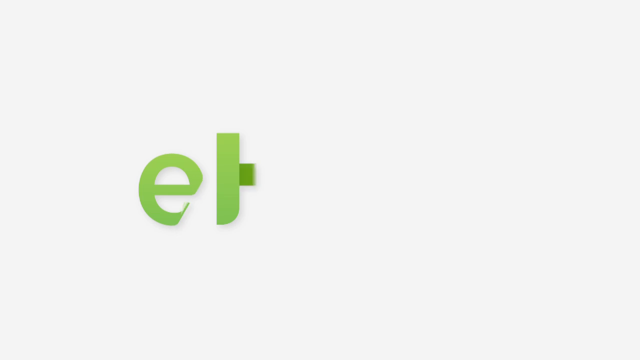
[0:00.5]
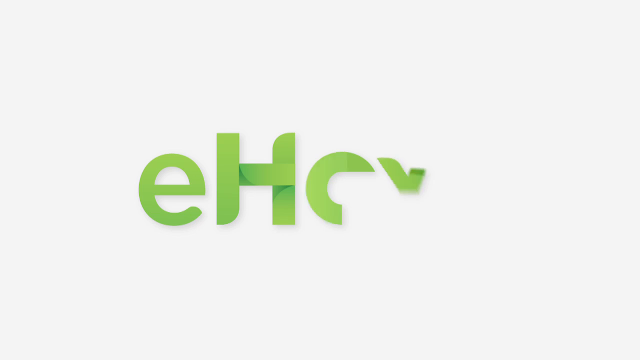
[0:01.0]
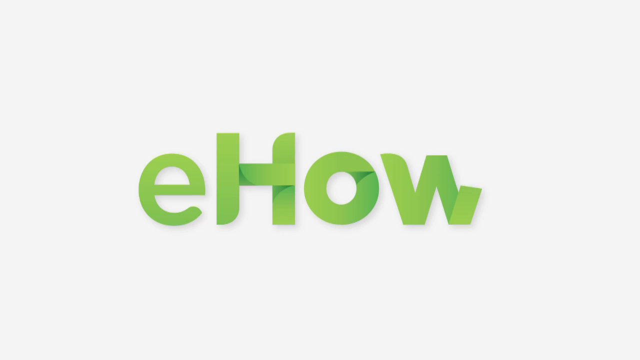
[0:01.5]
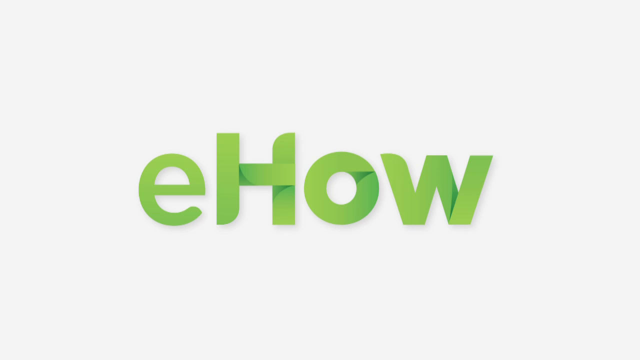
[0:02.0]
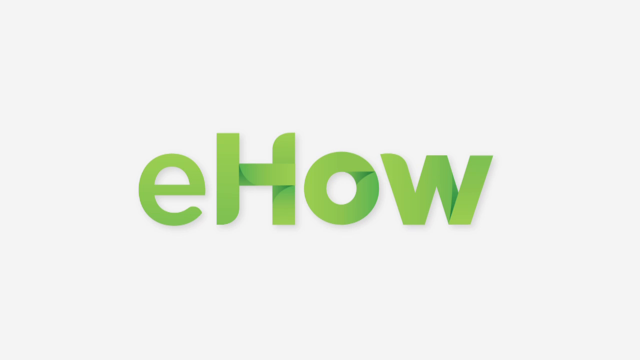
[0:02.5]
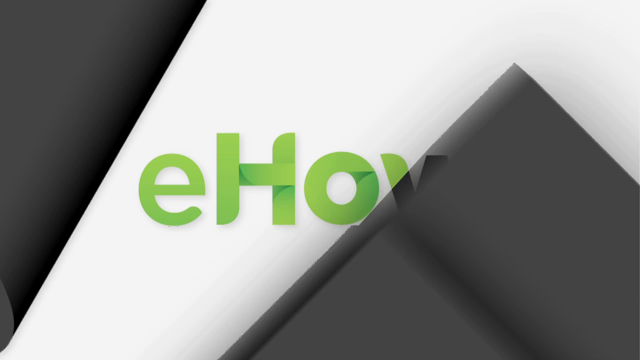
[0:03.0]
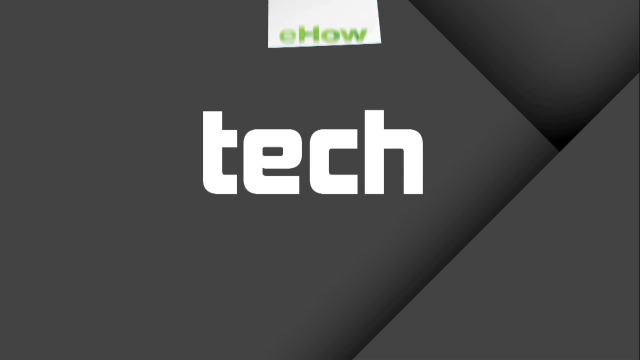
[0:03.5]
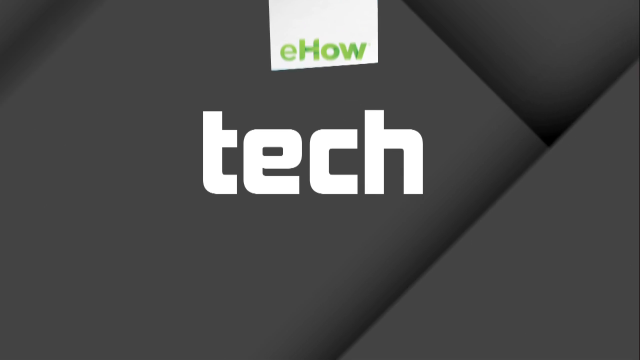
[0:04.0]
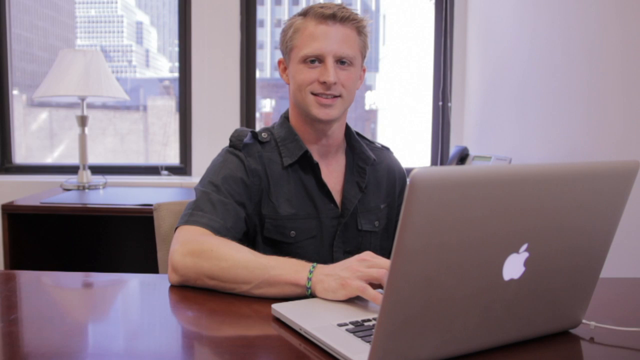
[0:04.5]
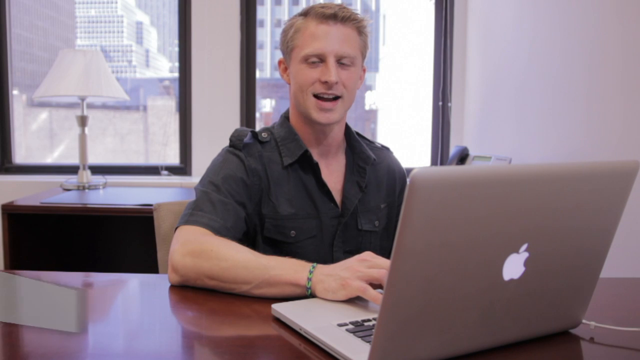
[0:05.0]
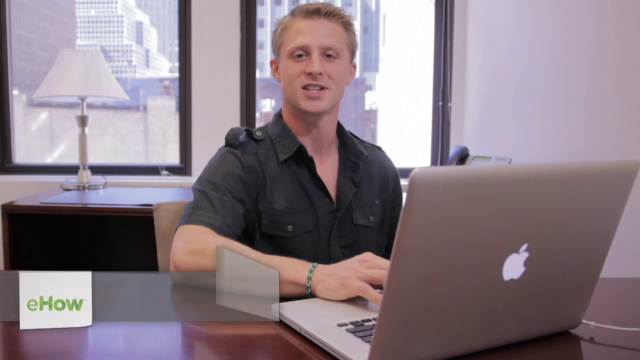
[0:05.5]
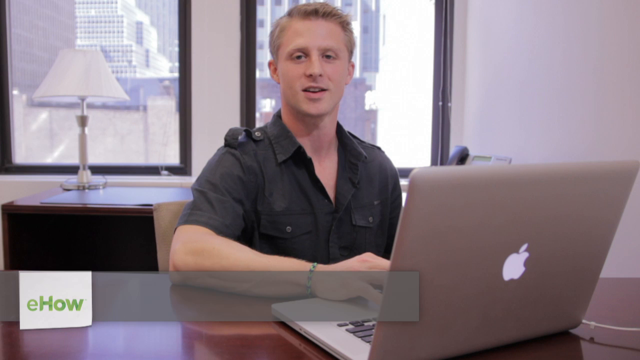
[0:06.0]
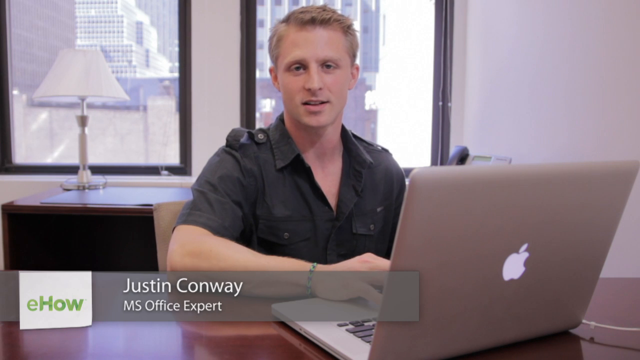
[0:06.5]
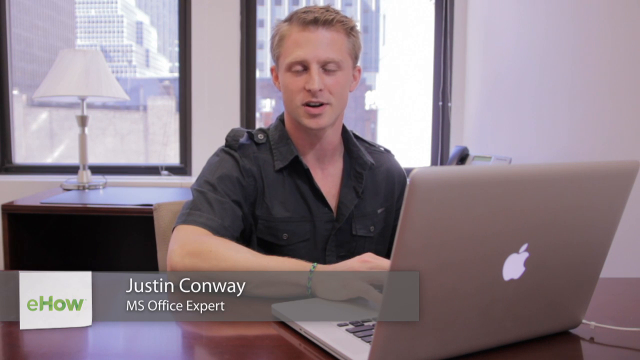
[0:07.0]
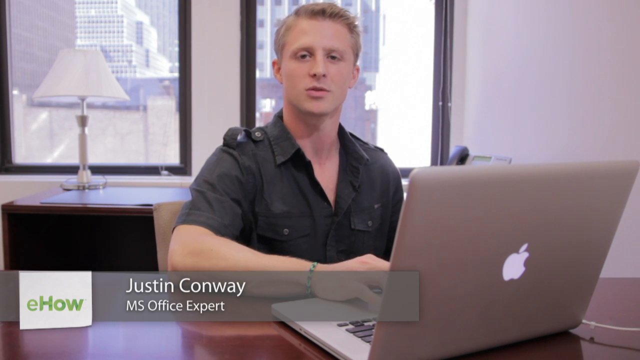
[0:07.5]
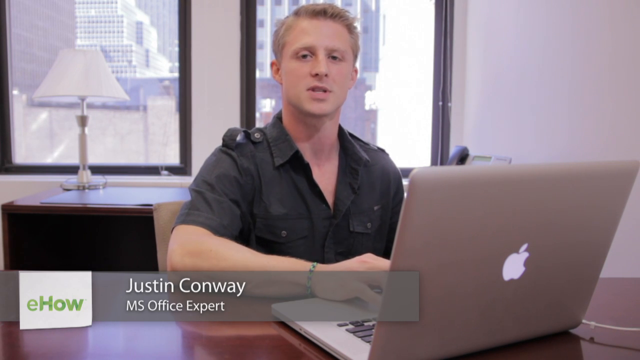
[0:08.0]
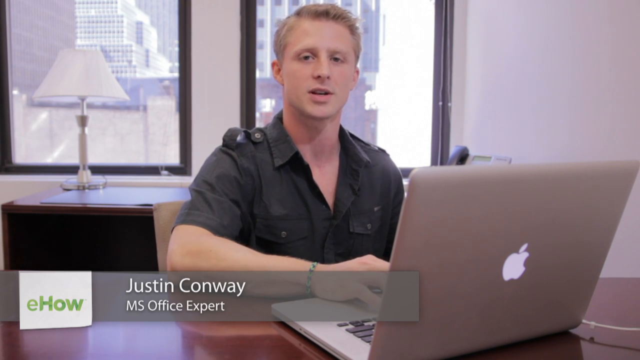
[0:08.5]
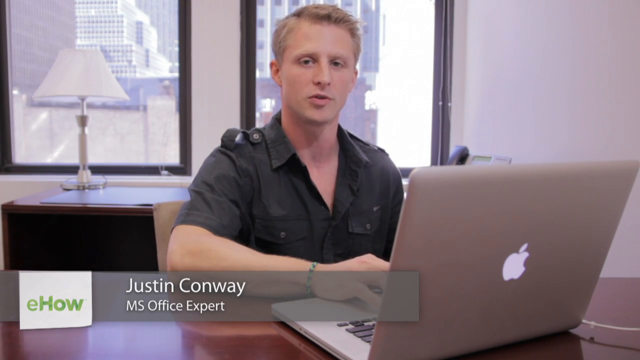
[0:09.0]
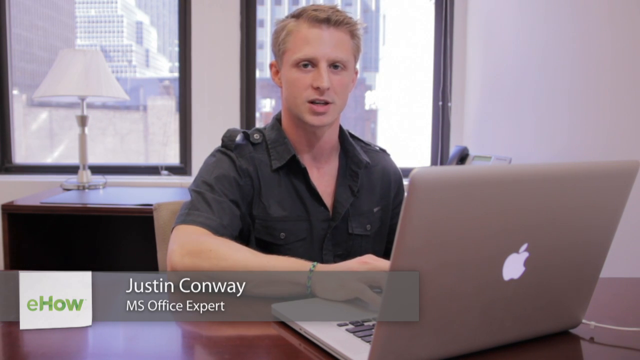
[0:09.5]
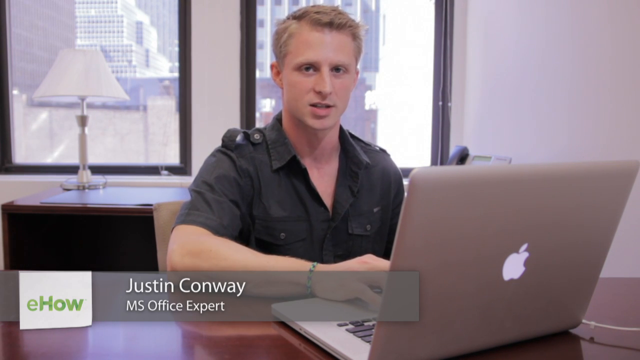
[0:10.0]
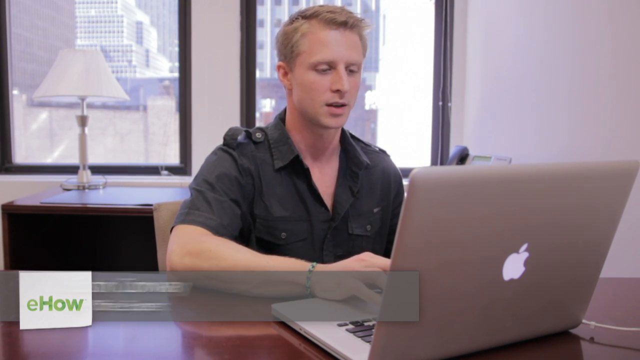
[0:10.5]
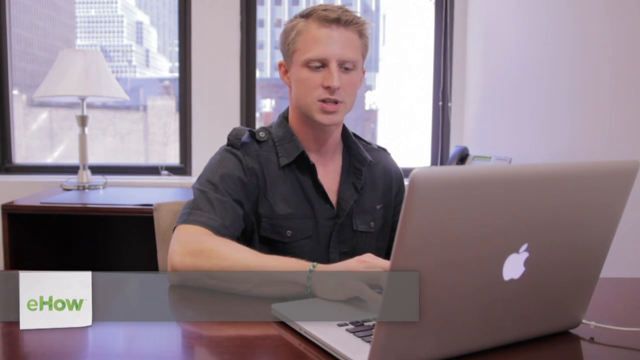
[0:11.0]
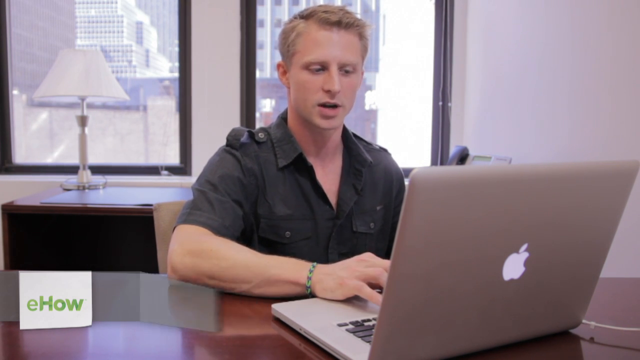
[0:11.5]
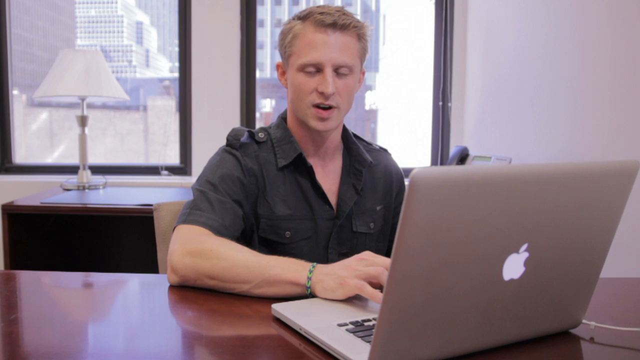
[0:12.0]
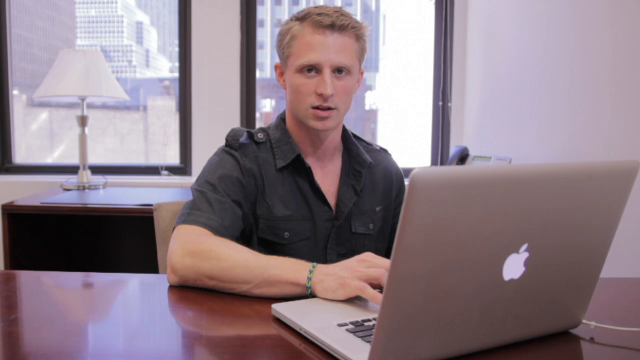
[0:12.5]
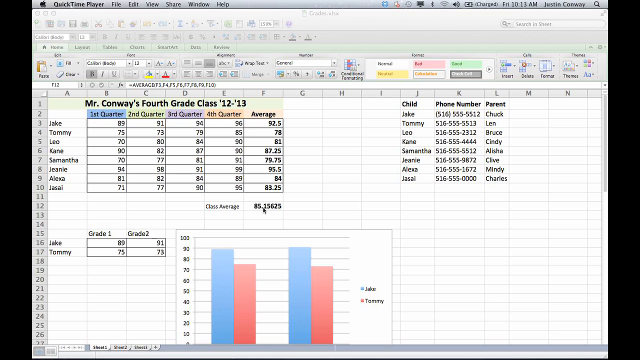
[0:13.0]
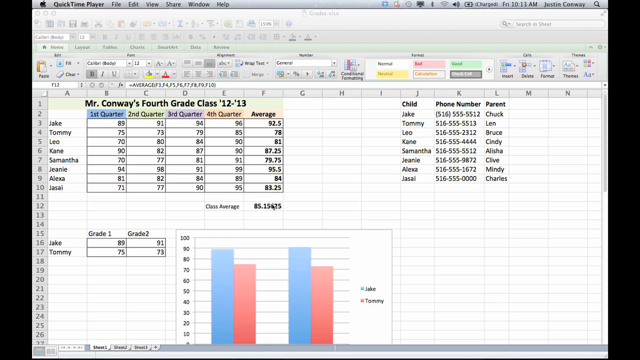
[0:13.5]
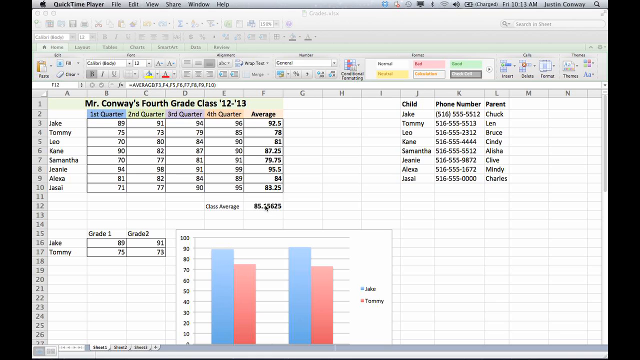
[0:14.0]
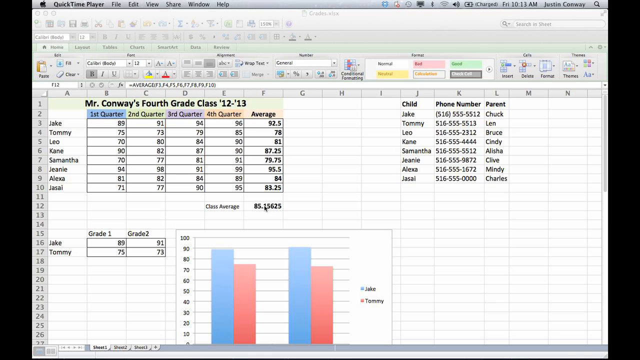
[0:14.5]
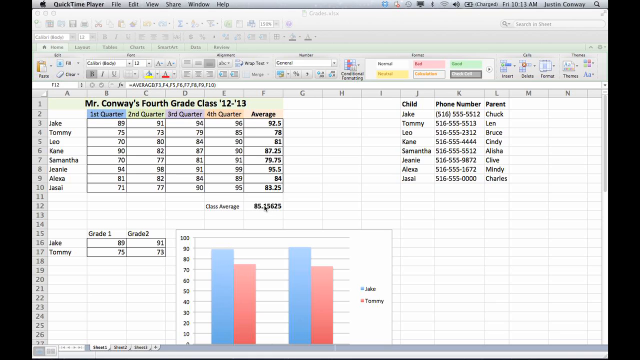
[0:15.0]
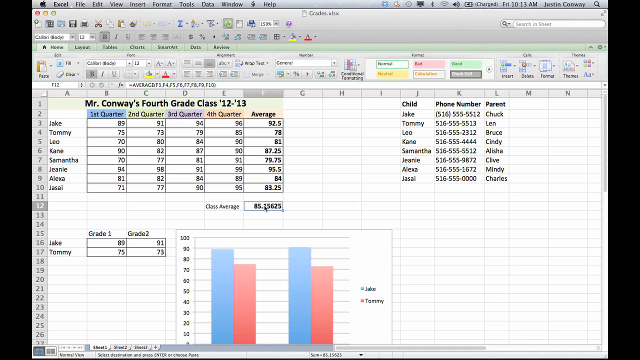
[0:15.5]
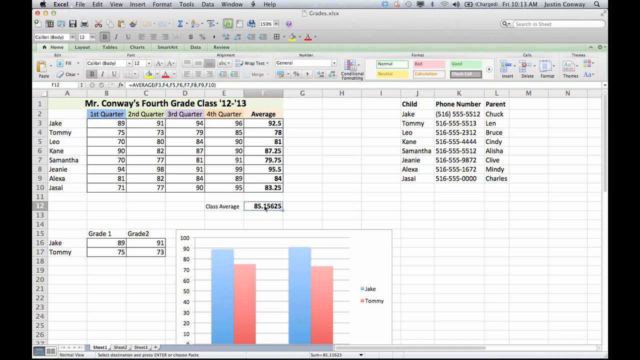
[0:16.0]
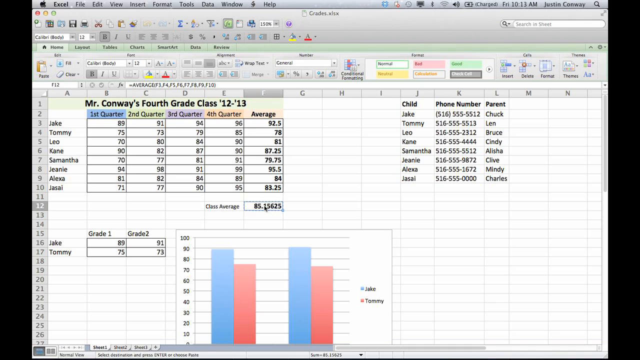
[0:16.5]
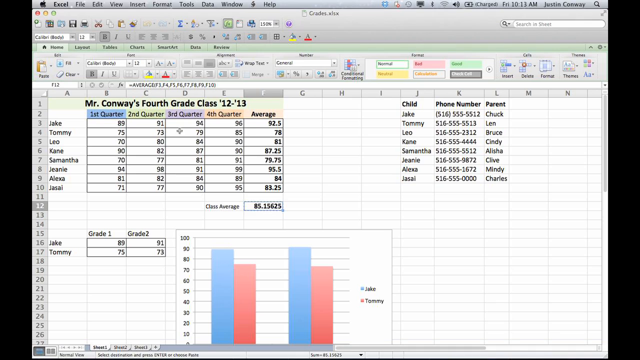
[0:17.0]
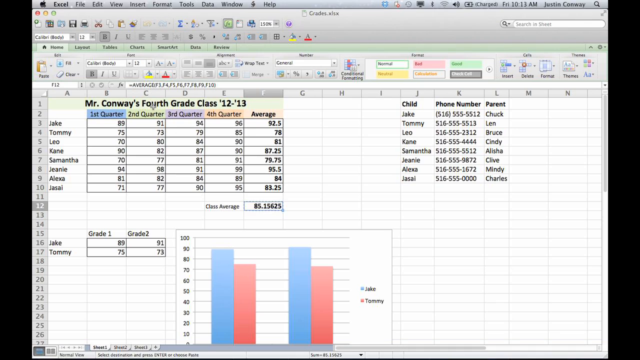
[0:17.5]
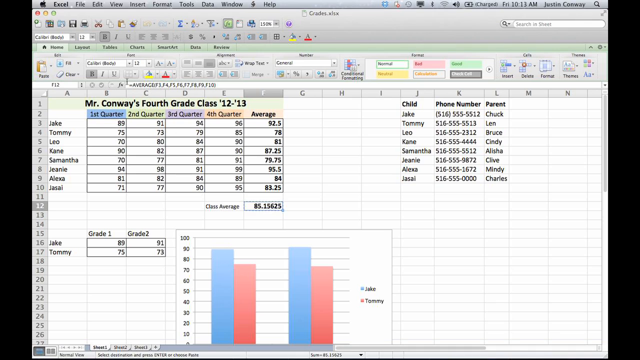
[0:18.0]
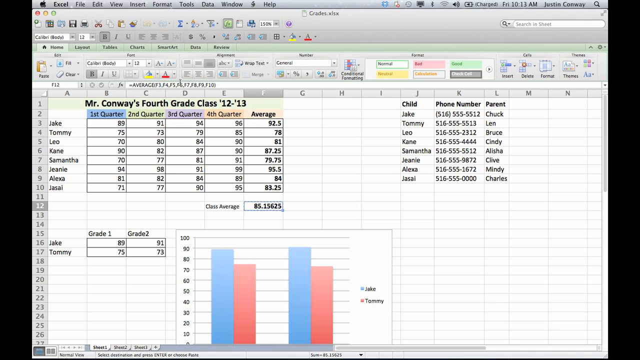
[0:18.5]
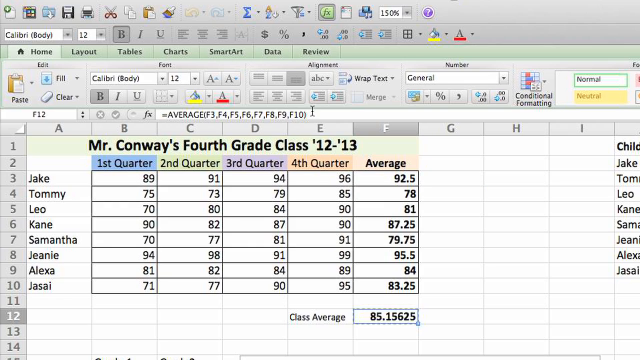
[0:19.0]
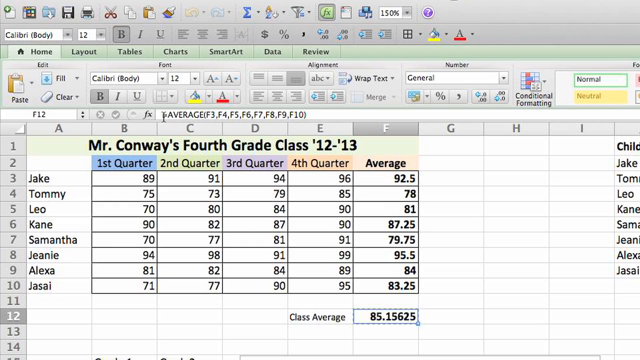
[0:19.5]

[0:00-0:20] A young man, maybe about 60 years old, with short hair, is in front of a laptop; he is a white man, and the laptop is an Apple. Behind him is a window through which another building outside can be seen. The company name shown is eHow. He then shows some graphs and tables. A bar graph and a table display different numbers, with labels for one quarter, two quarter, three quarter and four quarter, followed by an average.